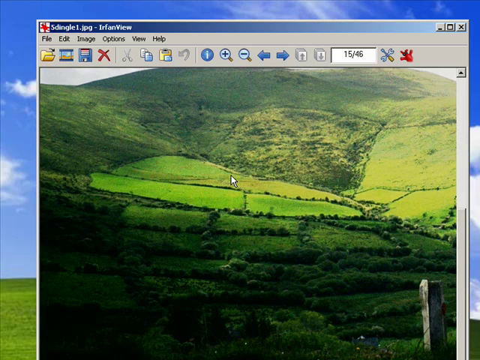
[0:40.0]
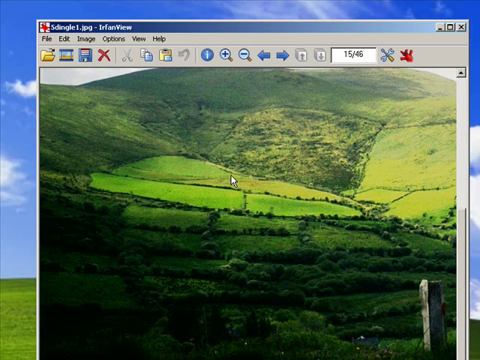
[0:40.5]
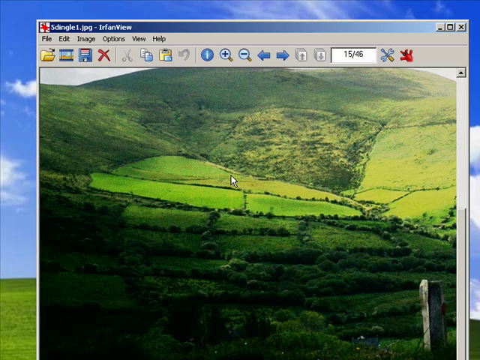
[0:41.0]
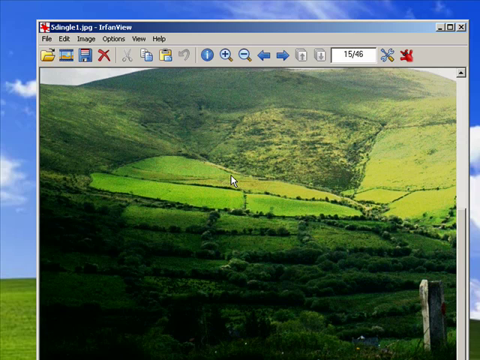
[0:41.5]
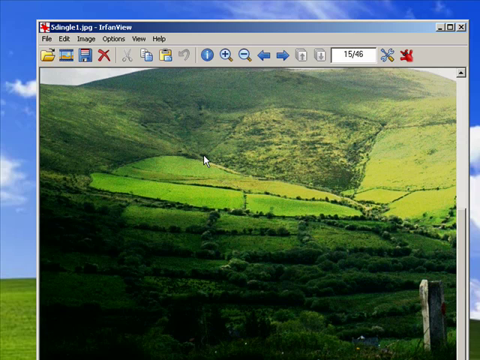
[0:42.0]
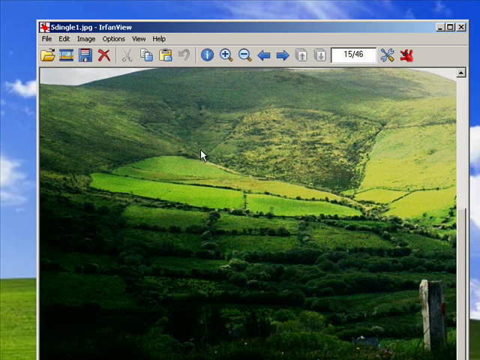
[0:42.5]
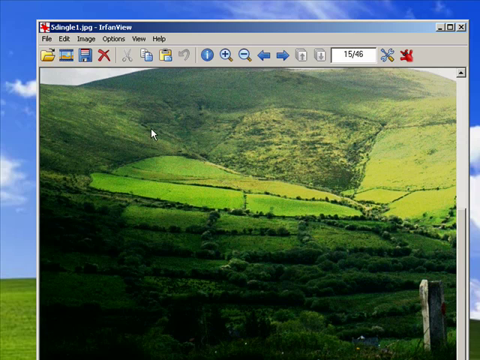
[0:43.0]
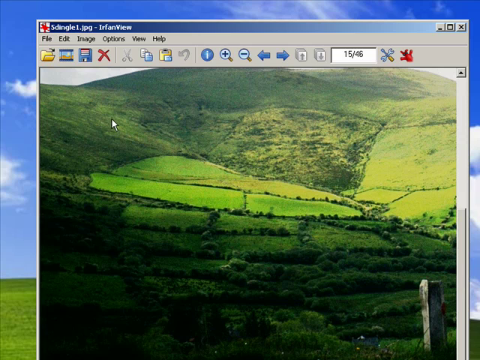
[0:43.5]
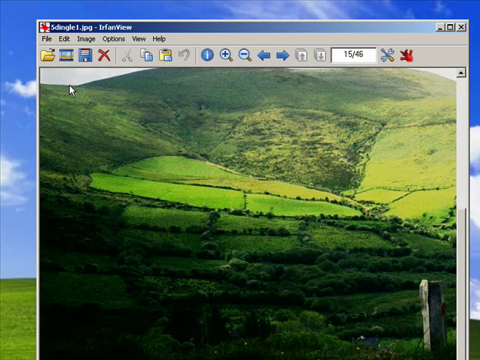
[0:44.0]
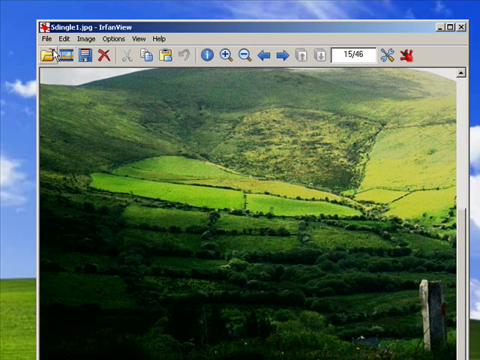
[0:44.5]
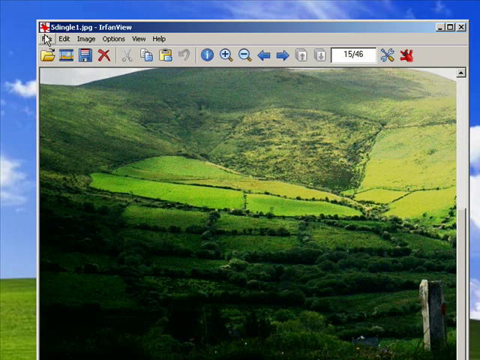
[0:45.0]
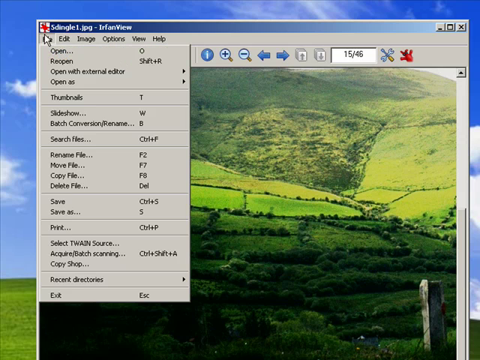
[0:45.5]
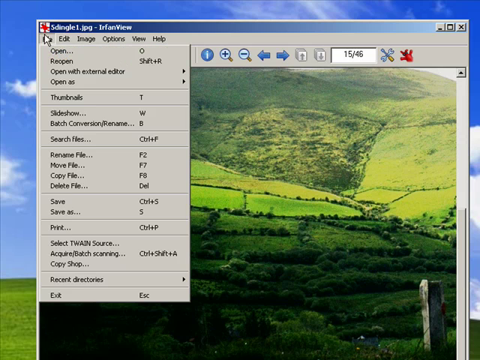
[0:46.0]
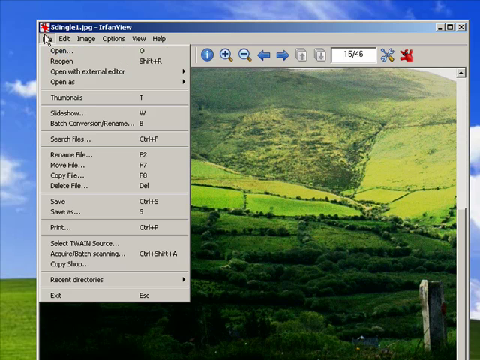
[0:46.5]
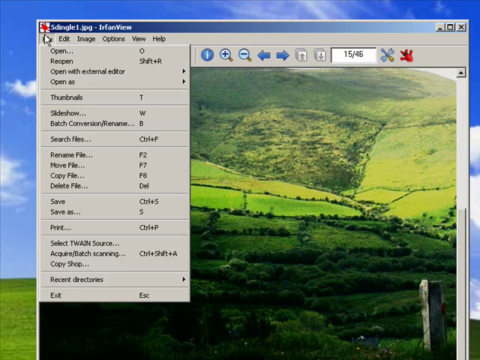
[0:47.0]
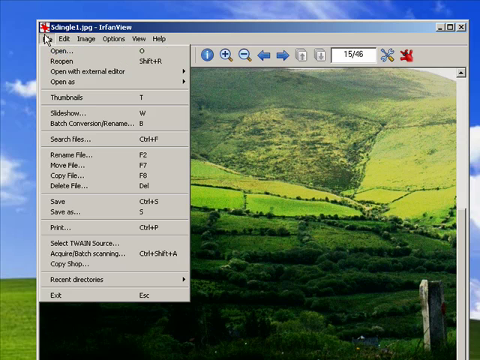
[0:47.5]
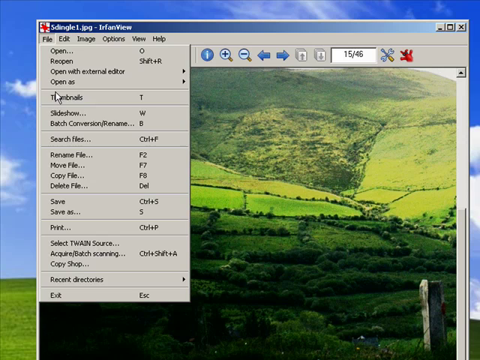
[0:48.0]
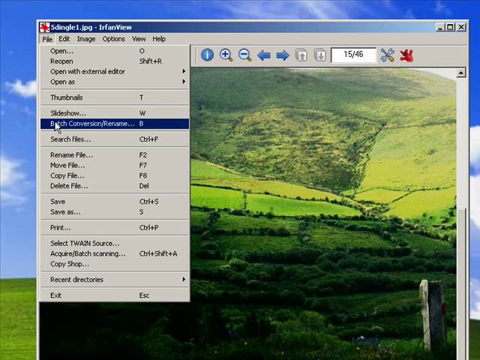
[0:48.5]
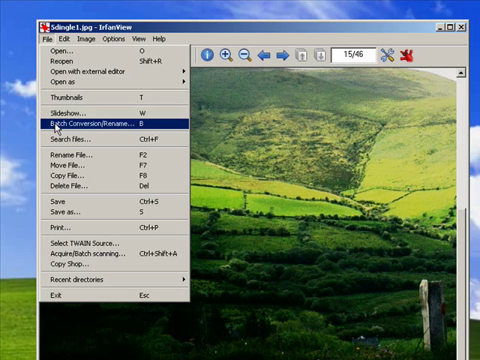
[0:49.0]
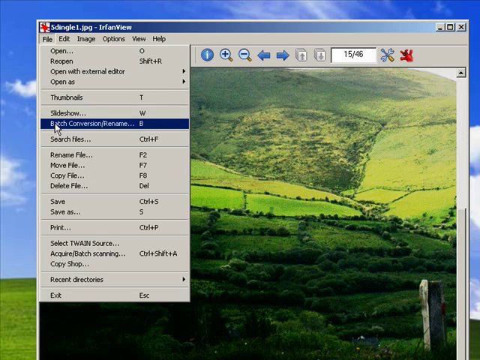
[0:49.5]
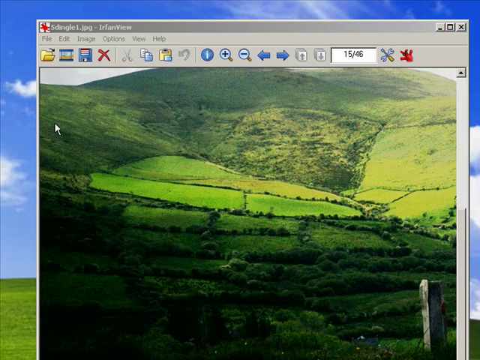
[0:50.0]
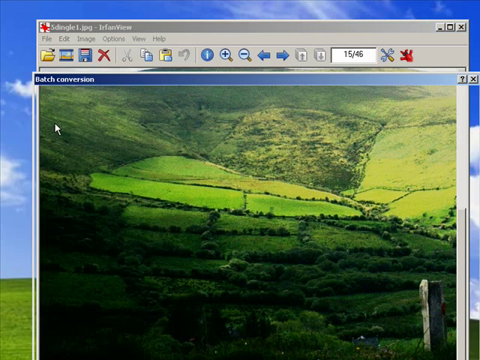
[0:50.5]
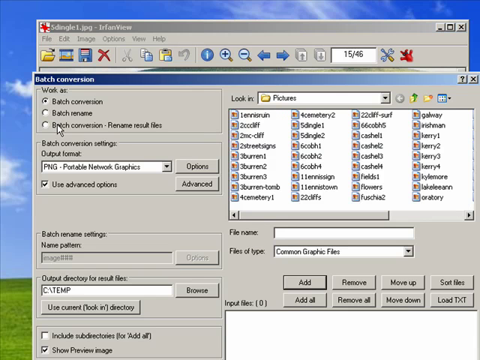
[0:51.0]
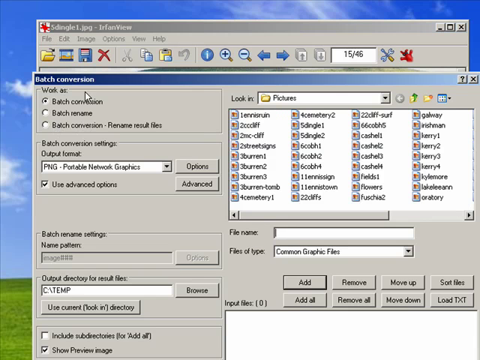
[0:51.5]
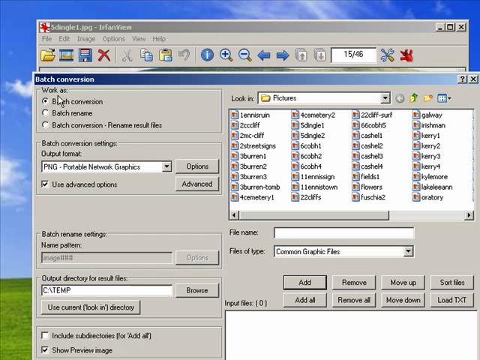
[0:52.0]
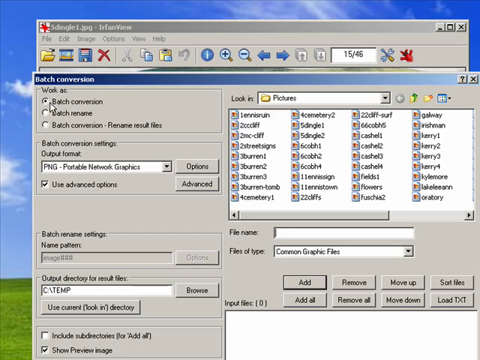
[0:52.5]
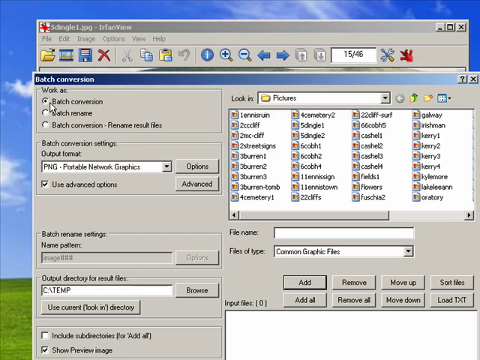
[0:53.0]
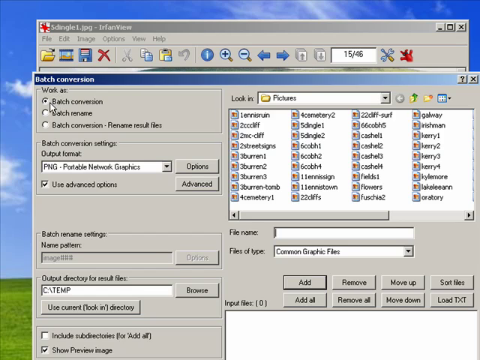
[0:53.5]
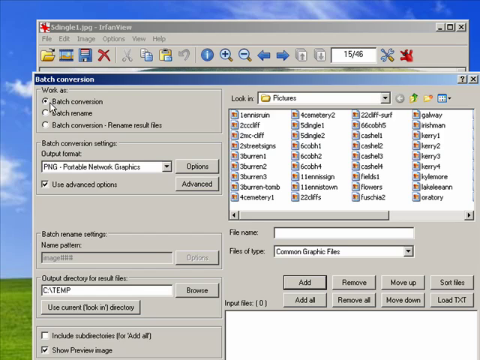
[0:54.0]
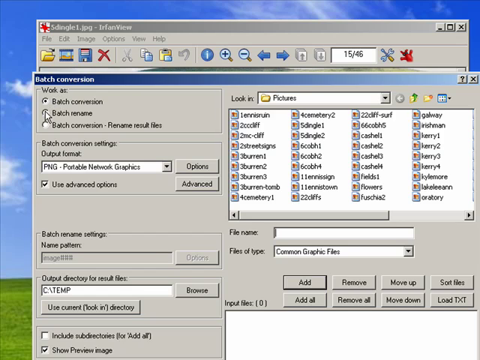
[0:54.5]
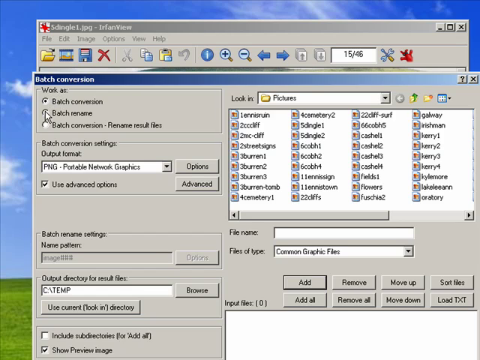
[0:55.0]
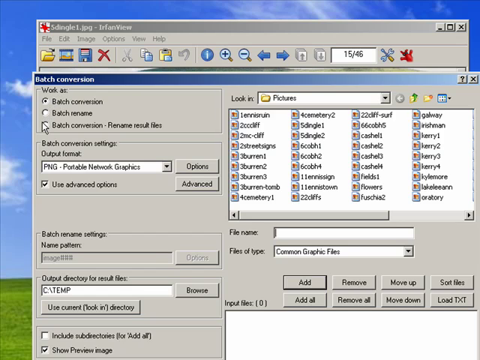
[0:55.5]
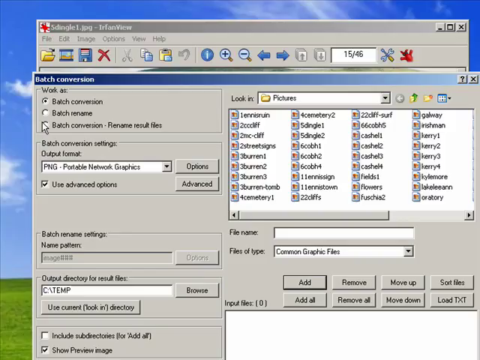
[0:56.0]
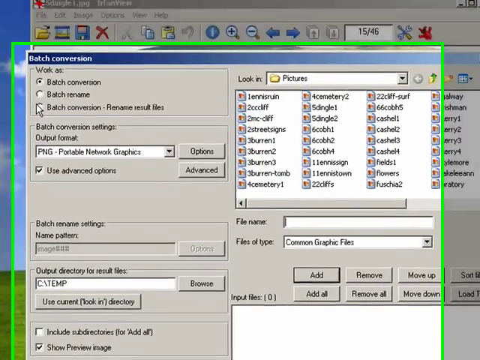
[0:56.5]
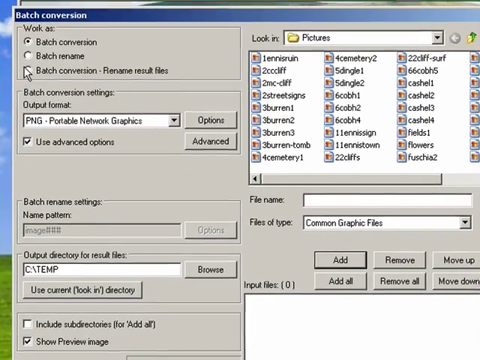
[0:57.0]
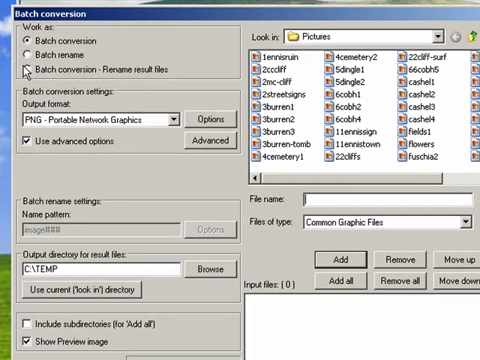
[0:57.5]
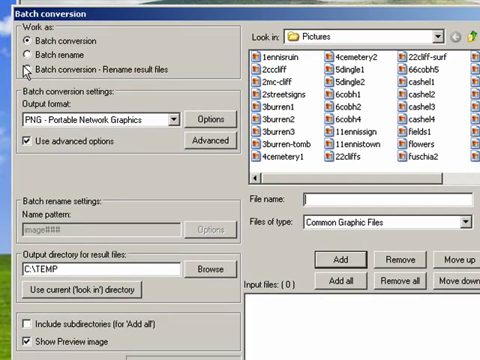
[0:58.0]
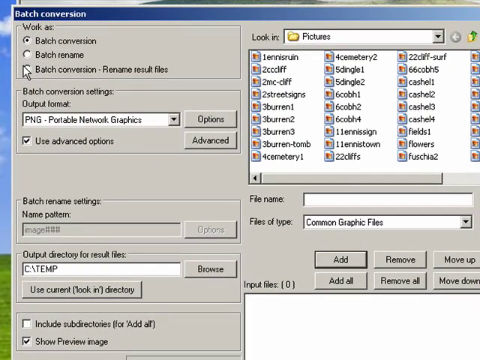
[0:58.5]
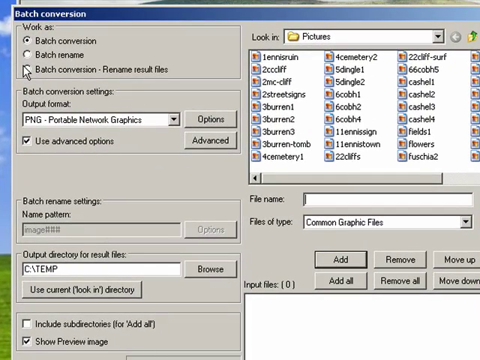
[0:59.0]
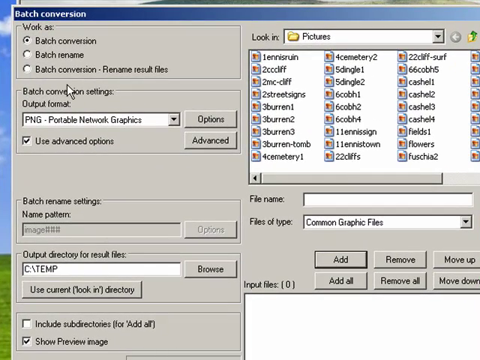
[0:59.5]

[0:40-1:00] An open page on a computer screen shows a photograph of what looks like a scene from a video game: green hills with the land marked into rectangles by trees and bushes. In the lower right corner is what looks like a tall stone formation similar to those at Stonehenge, but just one stone. Above it is a toolbar, and the white arrow cursor moves around the screen. It reaches up to the toolbar and clicks on File, and a drop-down menu appears. From the menu the cursor selects Batch Conversion/Rename, and a new page opens with the Batch Conversion header and a screen showing different picture files. The camera zooms in on this page.